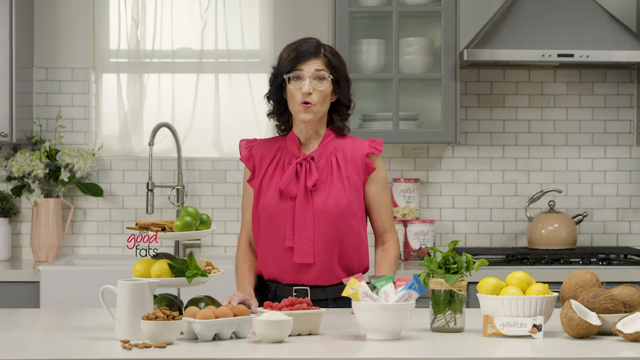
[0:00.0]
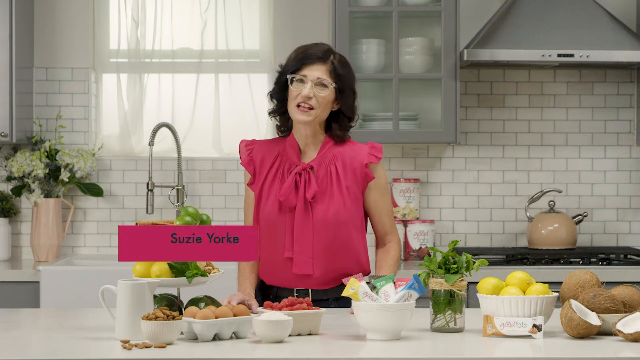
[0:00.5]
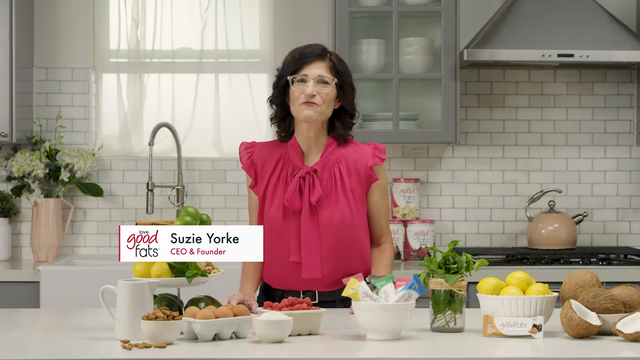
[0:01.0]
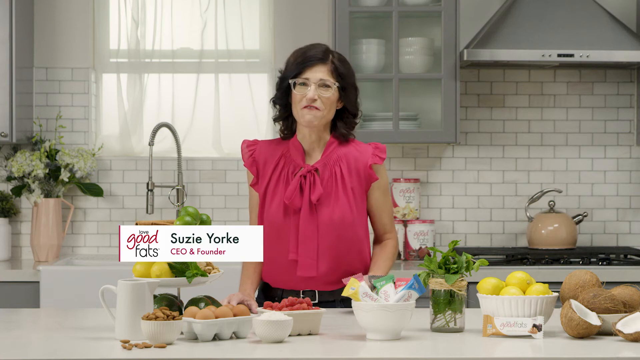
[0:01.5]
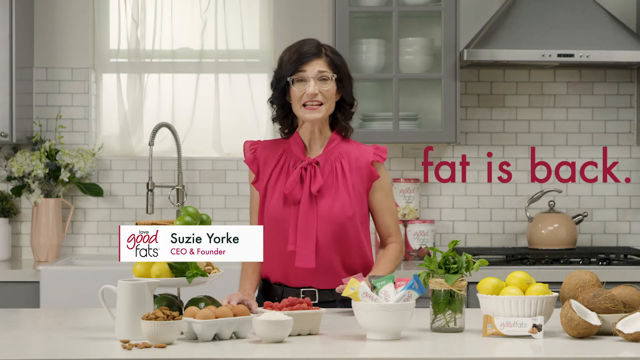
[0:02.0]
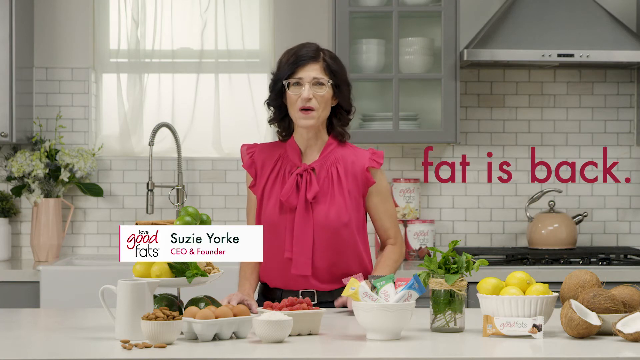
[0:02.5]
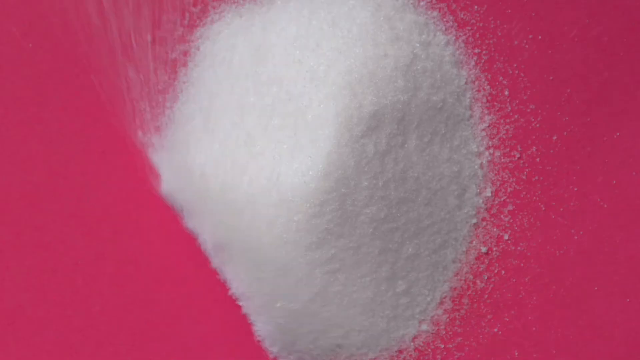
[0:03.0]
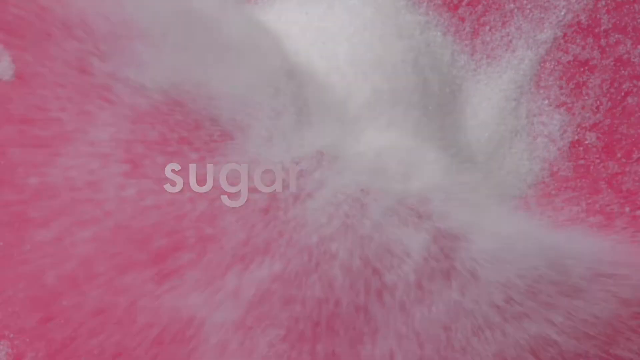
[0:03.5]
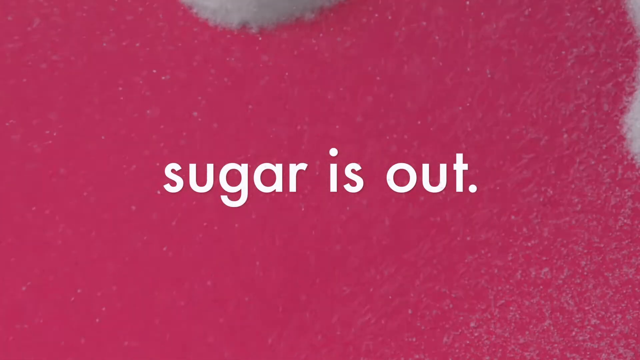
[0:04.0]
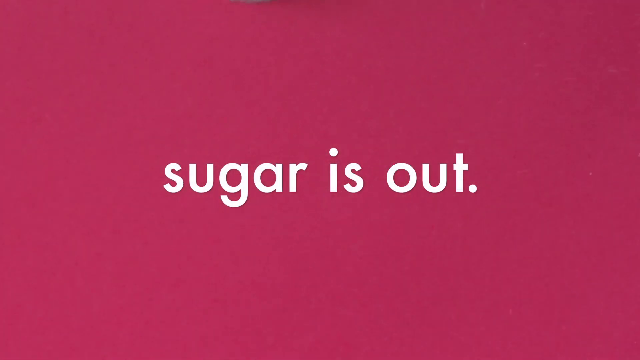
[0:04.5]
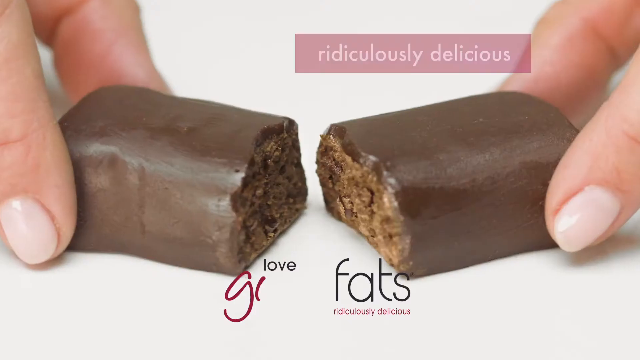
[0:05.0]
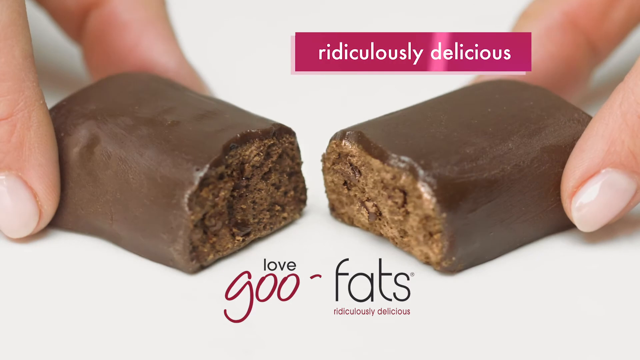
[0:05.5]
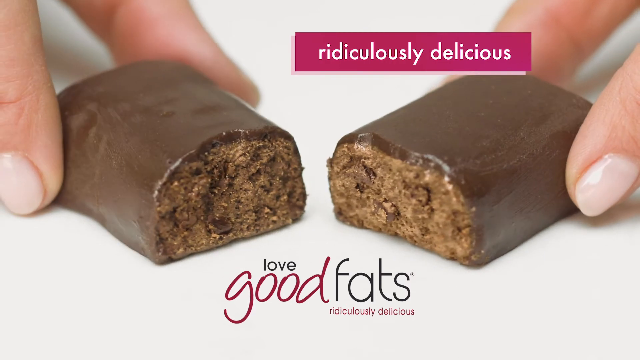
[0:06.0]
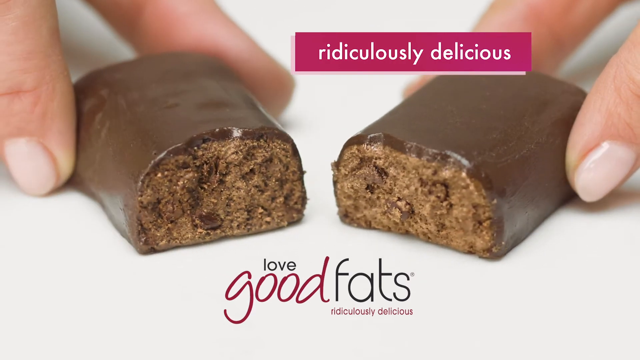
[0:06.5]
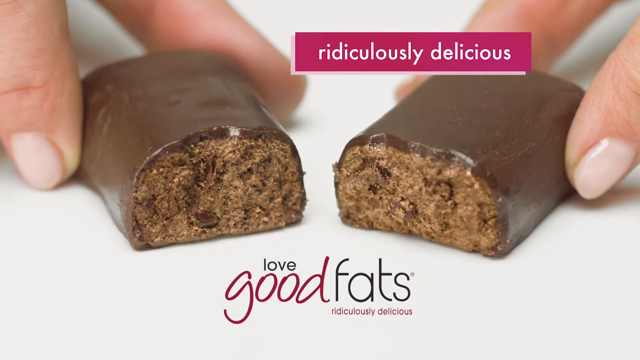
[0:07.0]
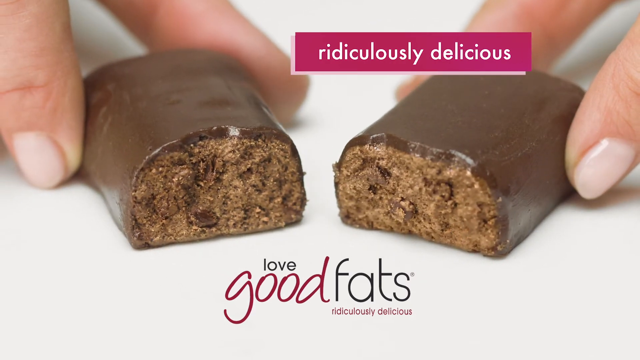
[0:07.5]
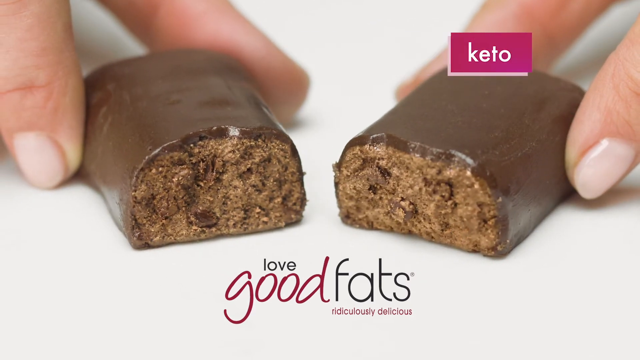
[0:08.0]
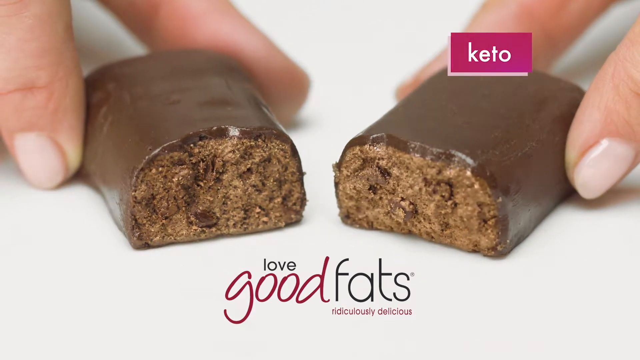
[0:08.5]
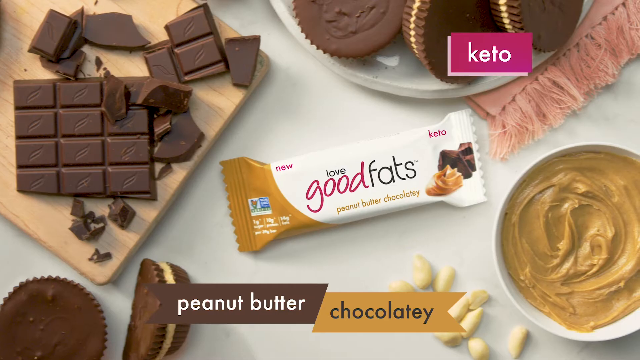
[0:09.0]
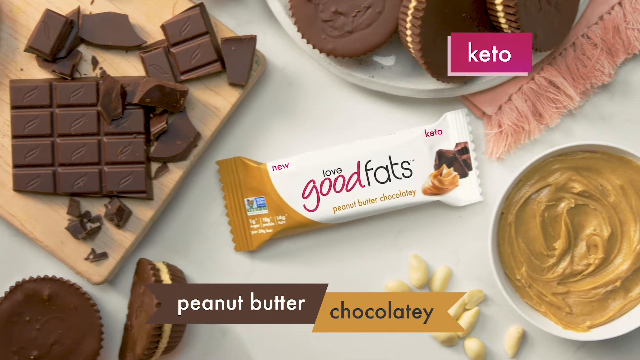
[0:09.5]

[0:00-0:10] An advert concerning sugar and fats, and chocolate as well. A lady, Susie York, CEO and food founder, is shown with the message that the sugar is out, apparently suggesting chocolate can be enjoyed without excess sugar. She wears a pink vest and eyeglasses. Many chocolates are present, not just one flavor. In the background there are fruits, a flower vase, sets of glass cups, lime and oranges.